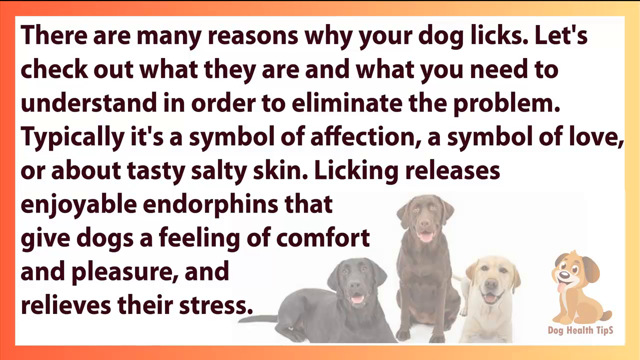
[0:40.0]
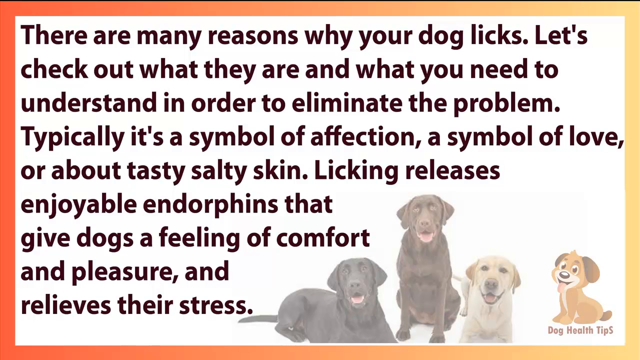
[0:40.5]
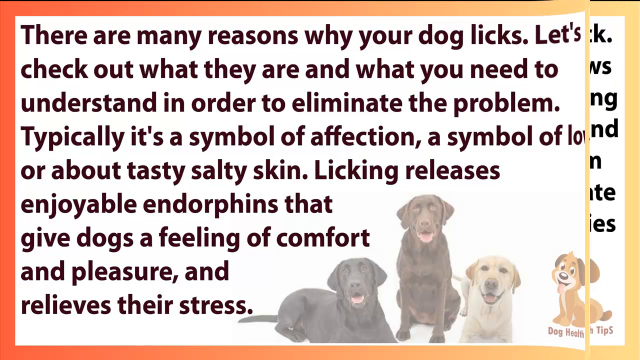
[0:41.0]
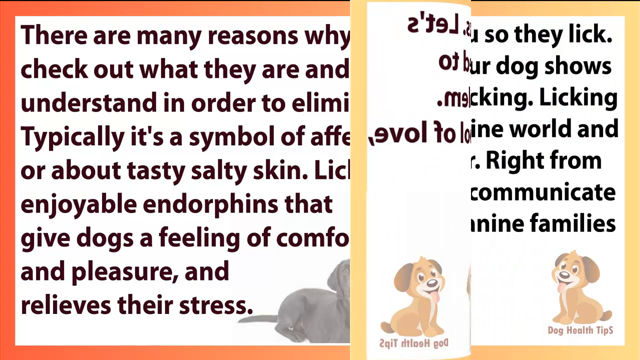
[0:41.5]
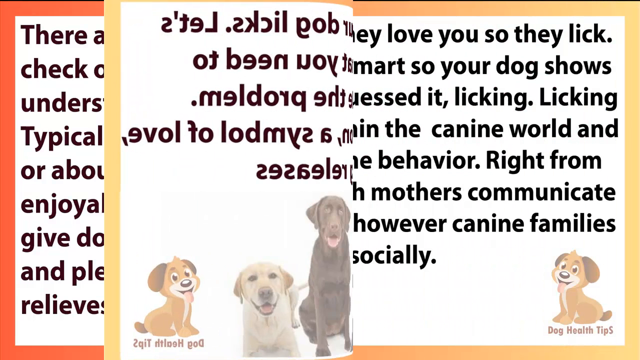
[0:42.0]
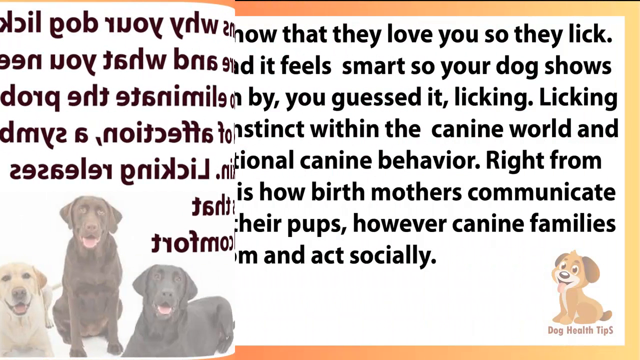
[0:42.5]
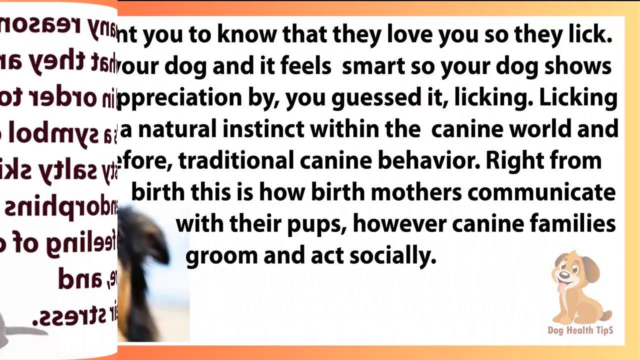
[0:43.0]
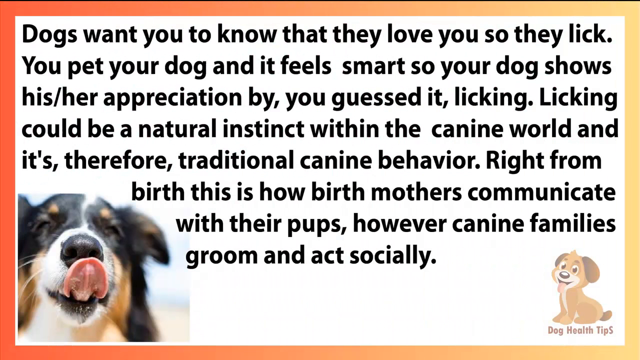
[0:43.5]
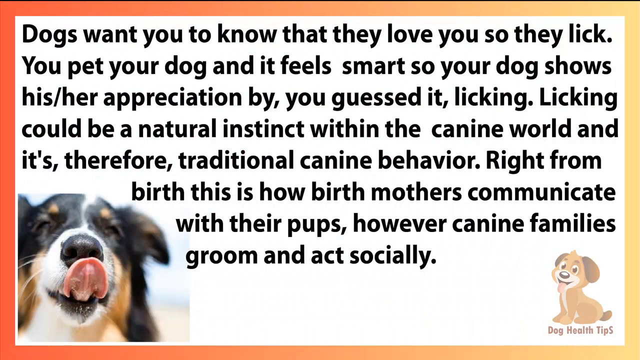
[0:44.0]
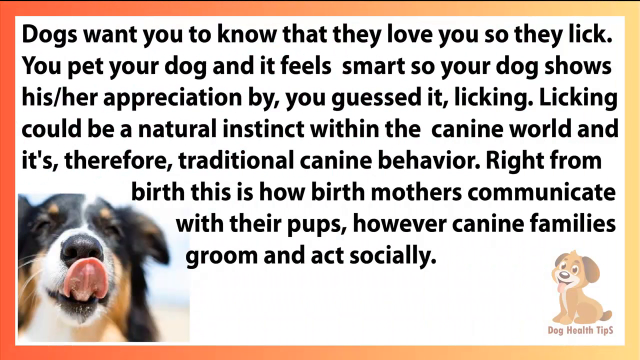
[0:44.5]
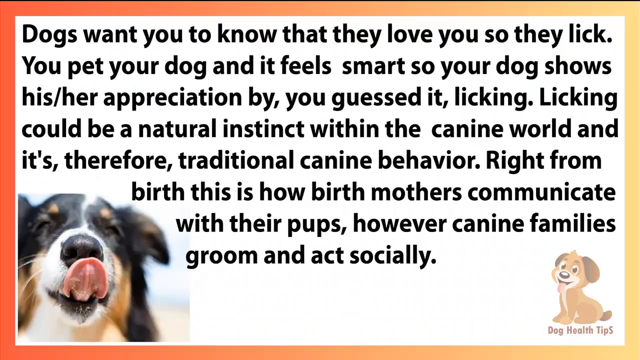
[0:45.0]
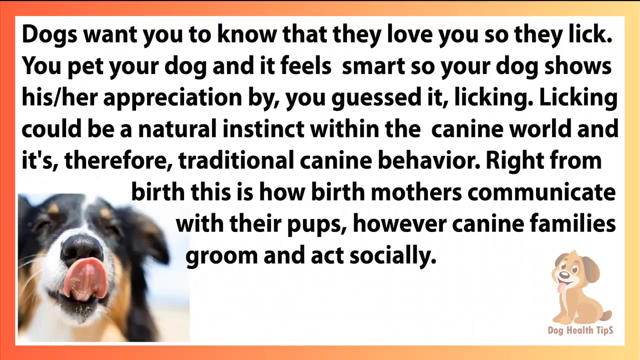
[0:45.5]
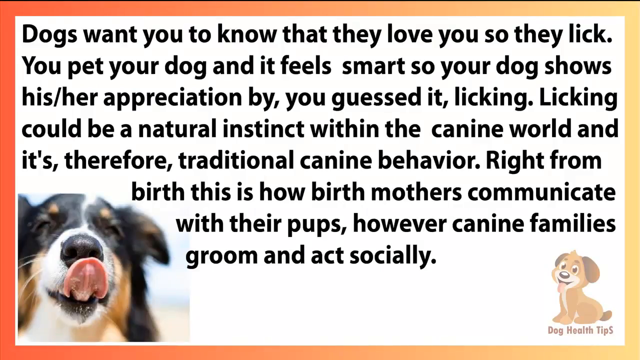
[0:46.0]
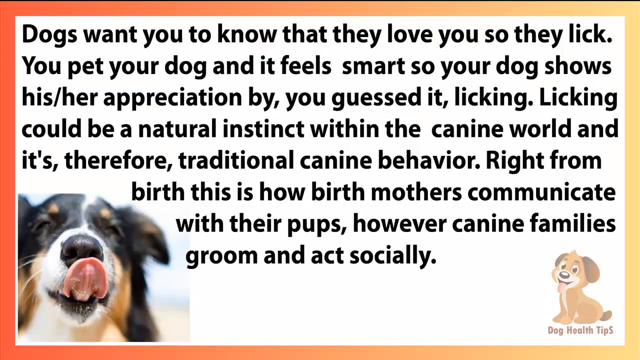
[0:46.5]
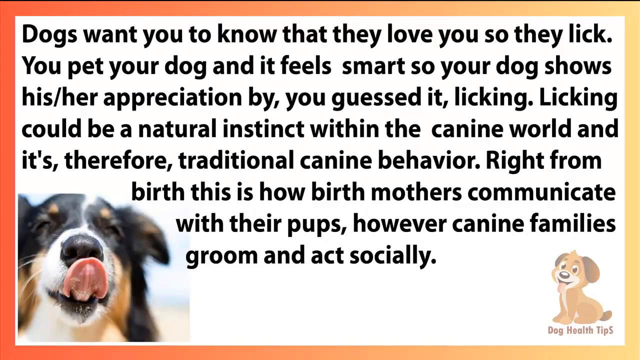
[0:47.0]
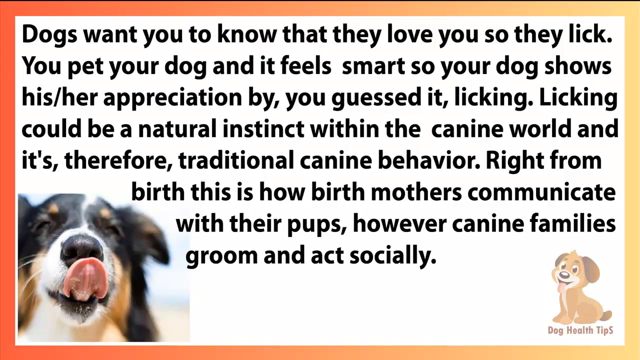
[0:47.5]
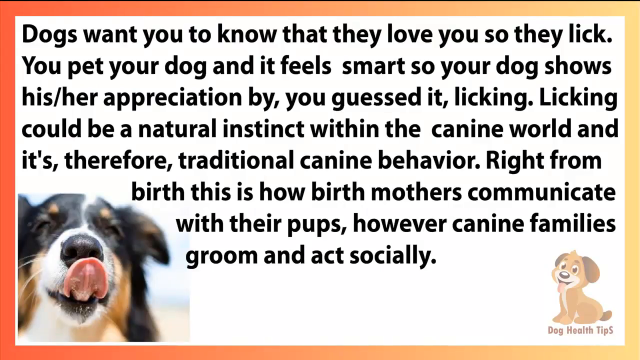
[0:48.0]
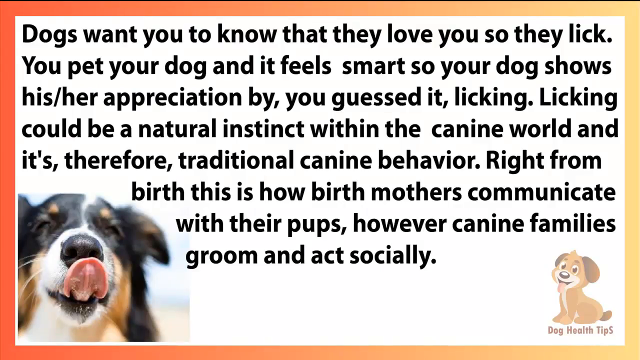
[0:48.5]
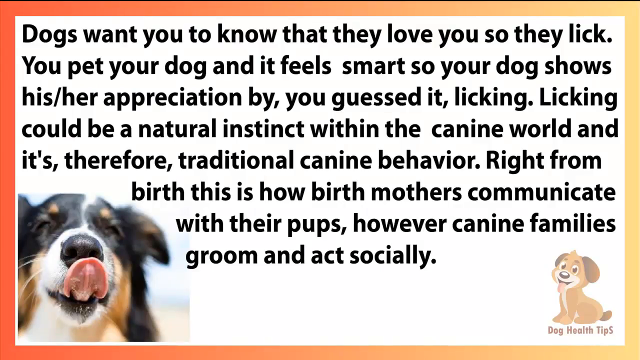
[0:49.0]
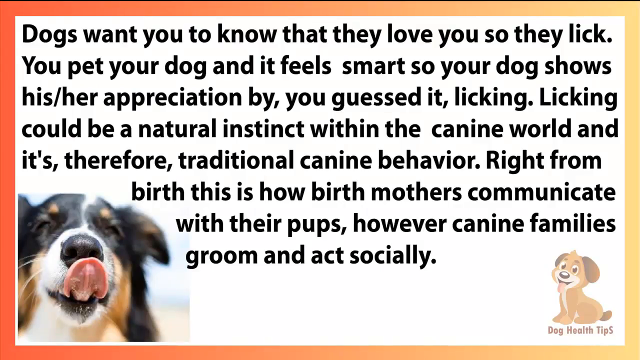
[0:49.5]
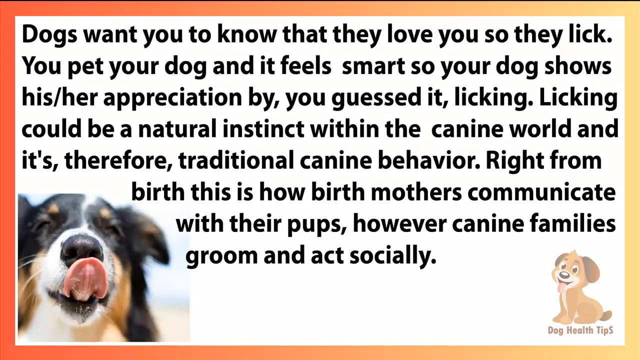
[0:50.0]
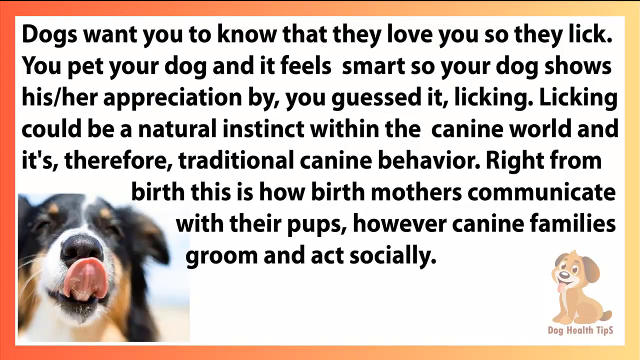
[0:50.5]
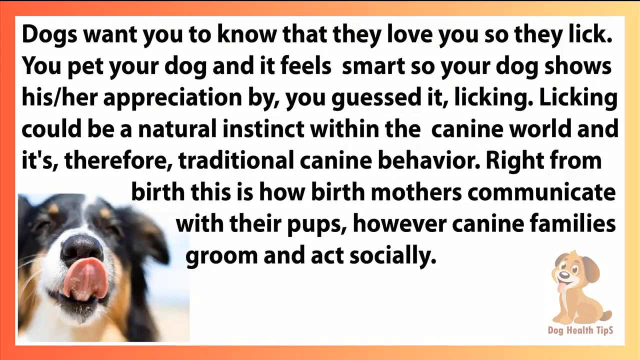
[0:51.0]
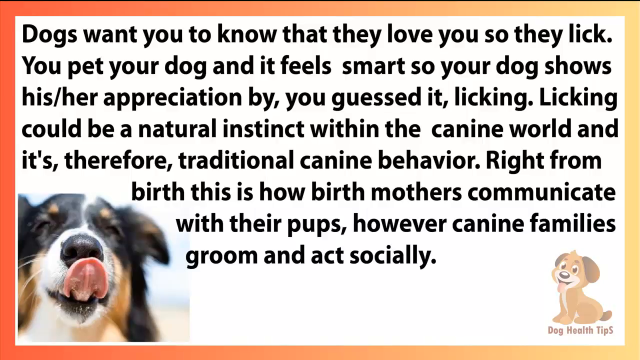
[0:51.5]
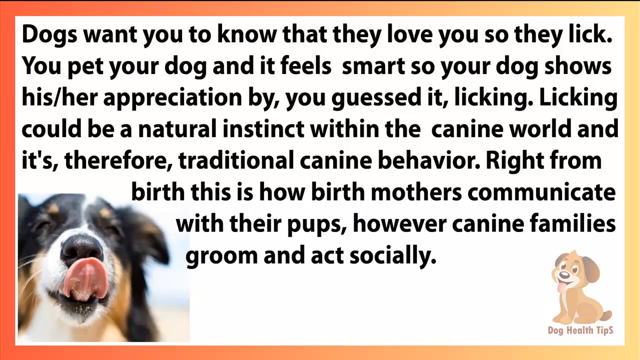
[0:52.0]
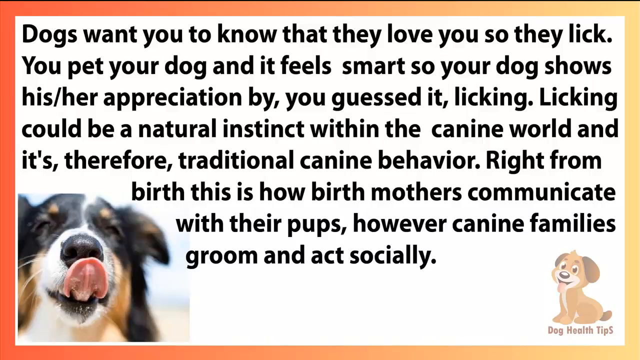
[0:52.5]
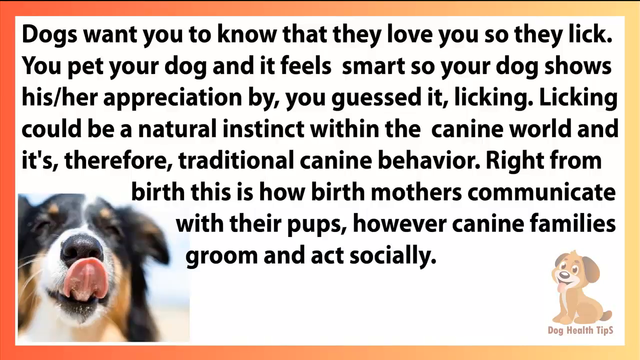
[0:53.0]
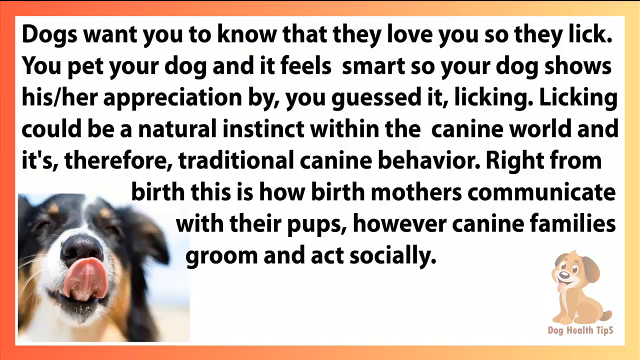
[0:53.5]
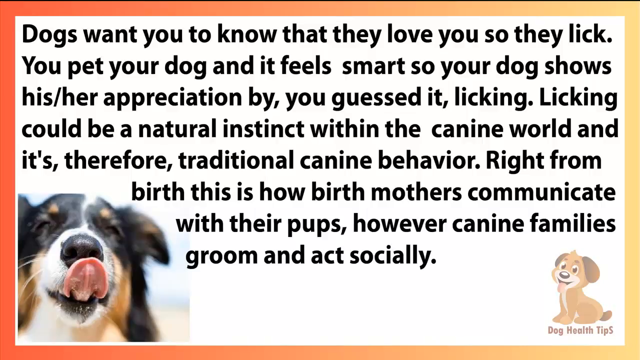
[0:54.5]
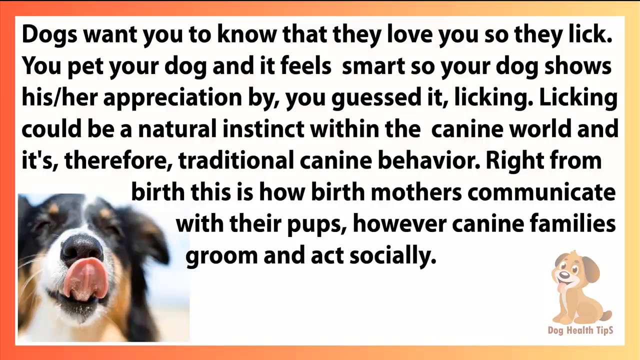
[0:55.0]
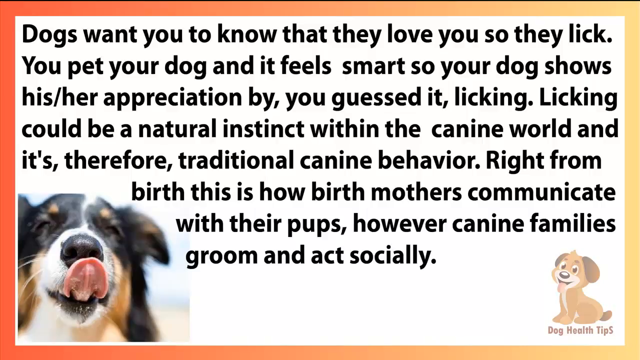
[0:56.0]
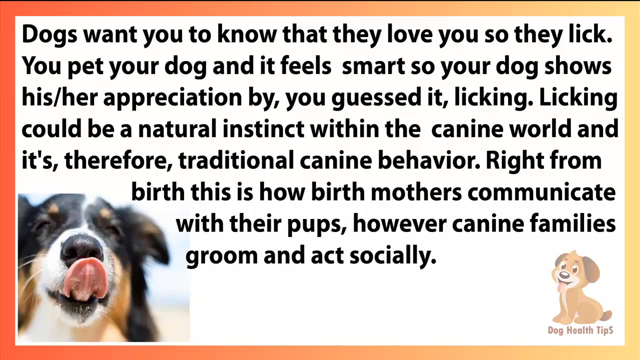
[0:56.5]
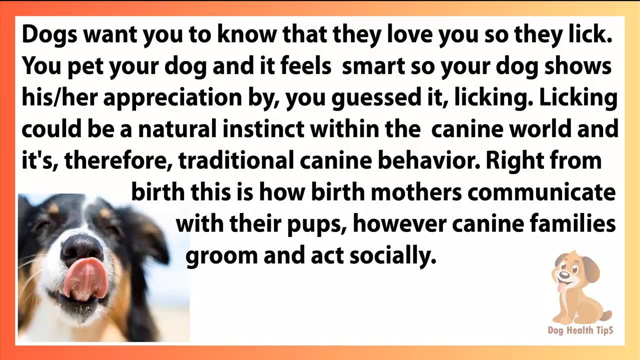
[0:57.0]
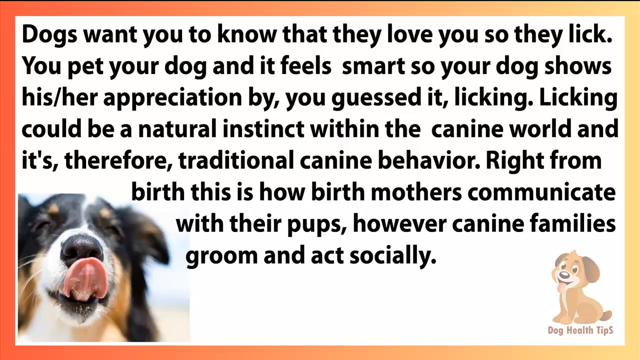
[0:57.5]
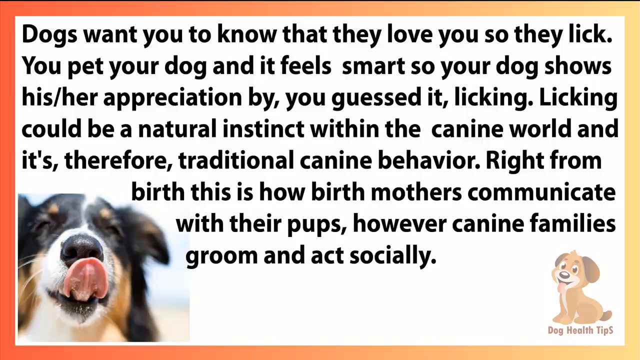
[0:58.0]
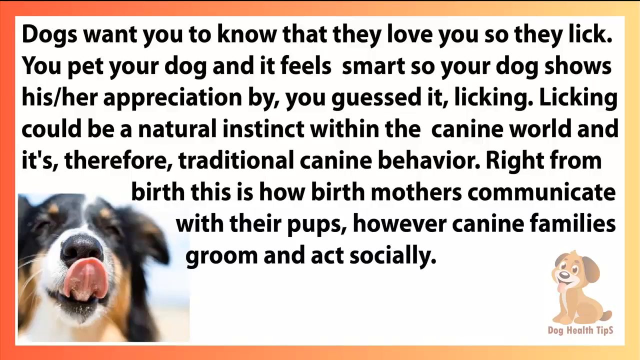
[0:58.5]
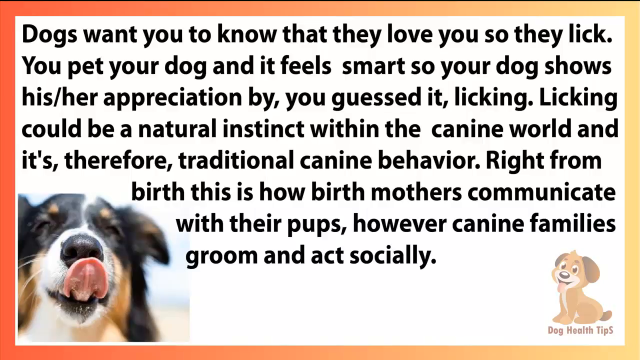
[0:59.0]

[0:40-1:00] The text on the background reads: "There are many reasons why your dog licks let's check out what they are and what you need to do to understand in order to eliminate the problem. Typically it's a symbol of affection, a symbol of love, or about tasty filthy skin. Licking releases enjoyable endorphins that give dogs a feeling of comfort and pleasure and relieves their stress." The background has a border that starts red and goes ombre into orange and then yellow. The cartoon dog logo is in the bottom right-hand corner, and toward the bottom left, toward the middle of the screen, are three Labradors: one golden, one brown and one black. Two of them are laying down and one is sitting up. They all appear happy, relaxed and almost smiling. The text is about why dogs lick and what this shows.